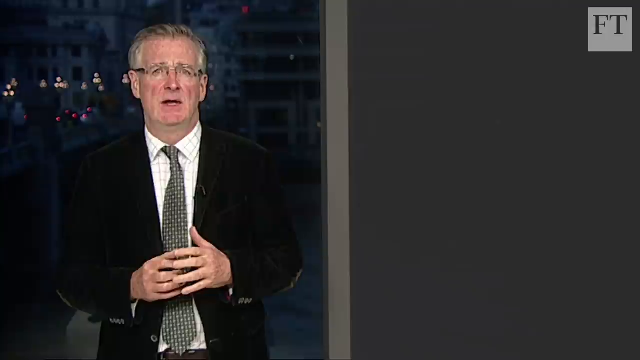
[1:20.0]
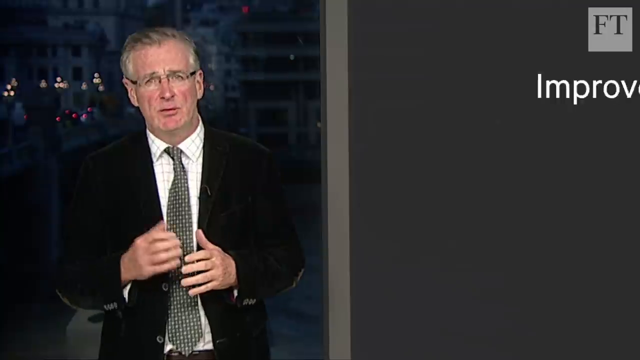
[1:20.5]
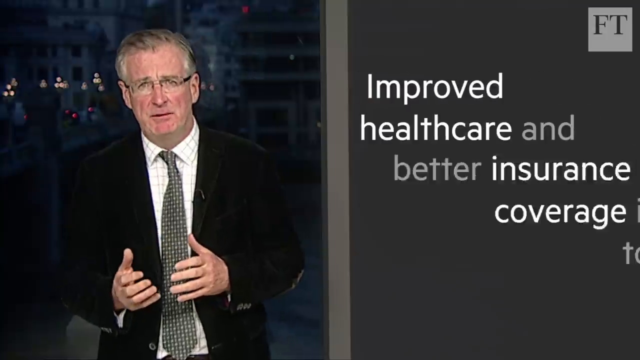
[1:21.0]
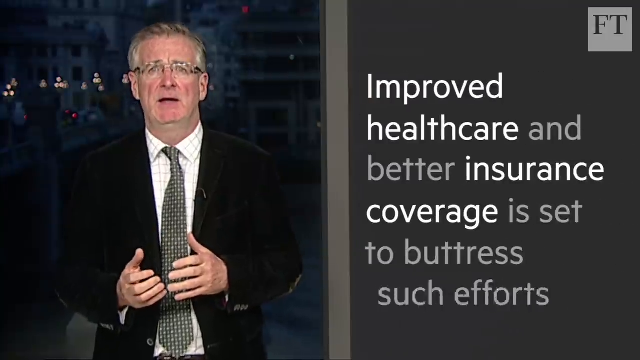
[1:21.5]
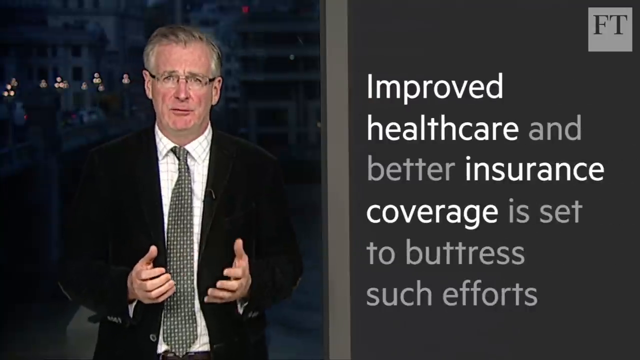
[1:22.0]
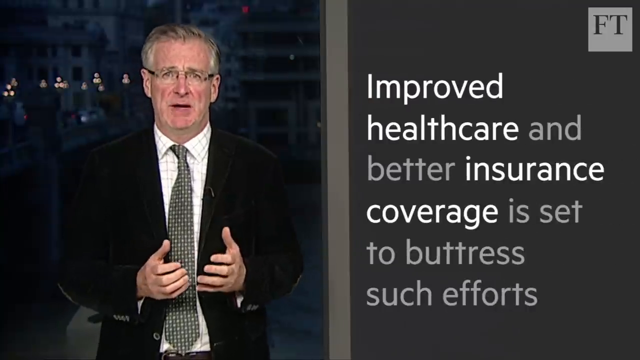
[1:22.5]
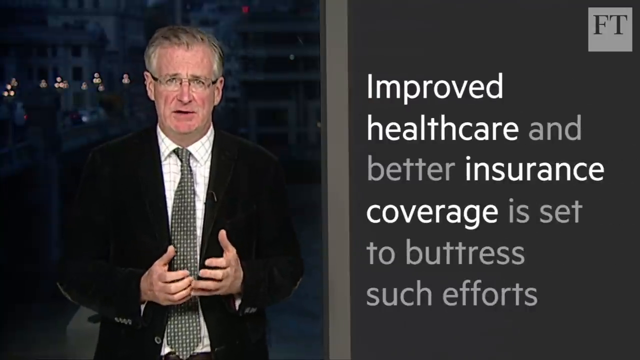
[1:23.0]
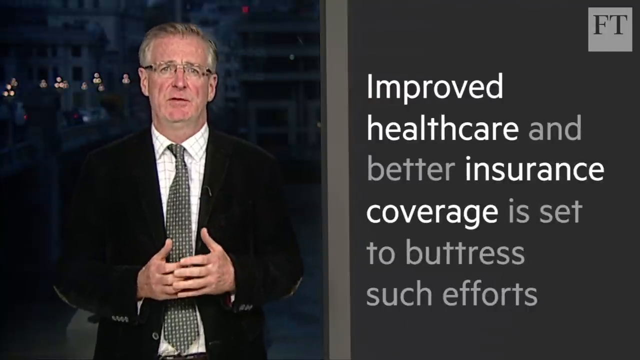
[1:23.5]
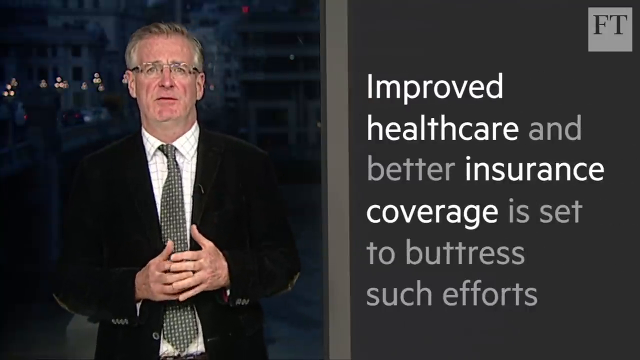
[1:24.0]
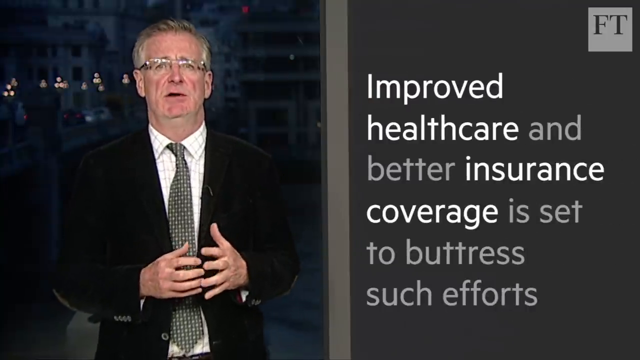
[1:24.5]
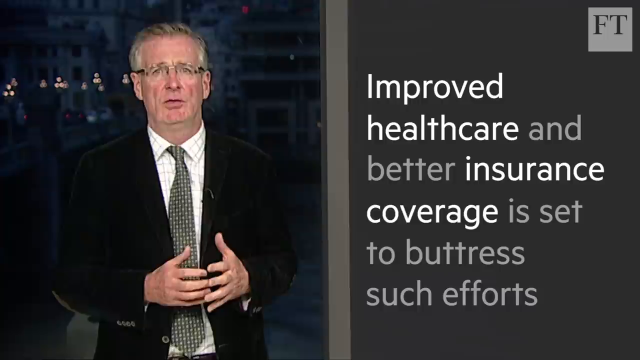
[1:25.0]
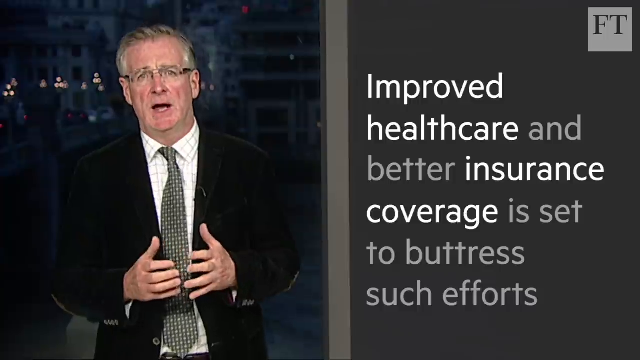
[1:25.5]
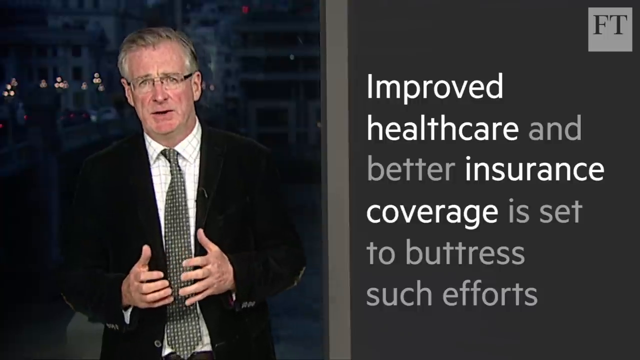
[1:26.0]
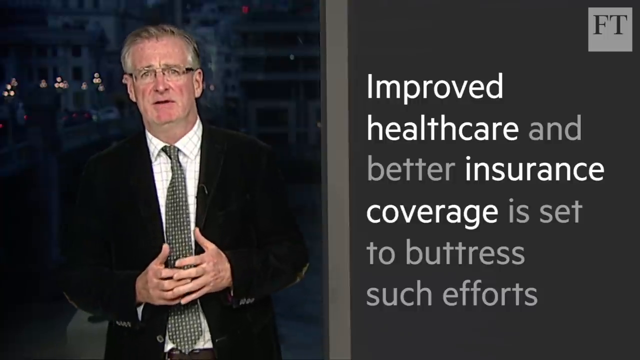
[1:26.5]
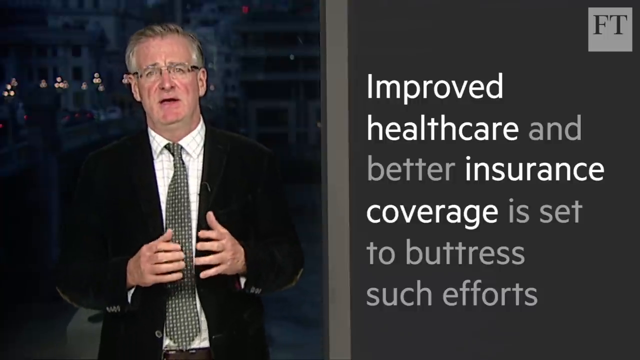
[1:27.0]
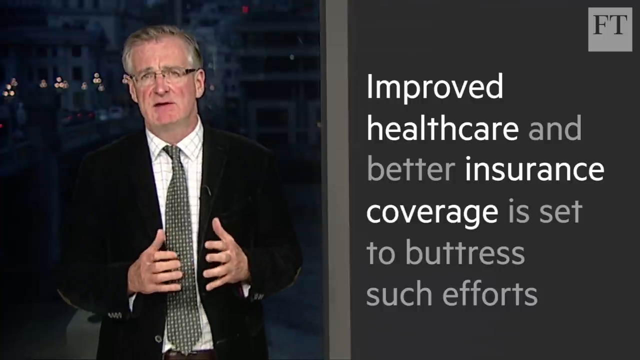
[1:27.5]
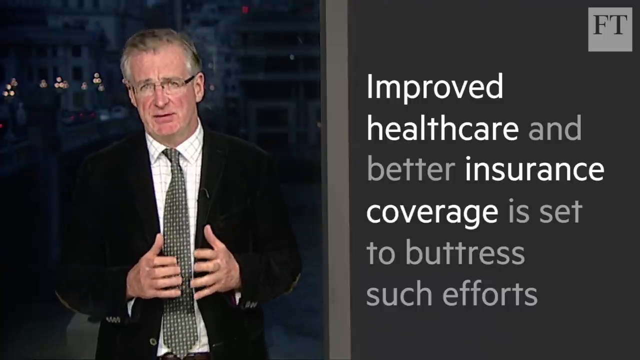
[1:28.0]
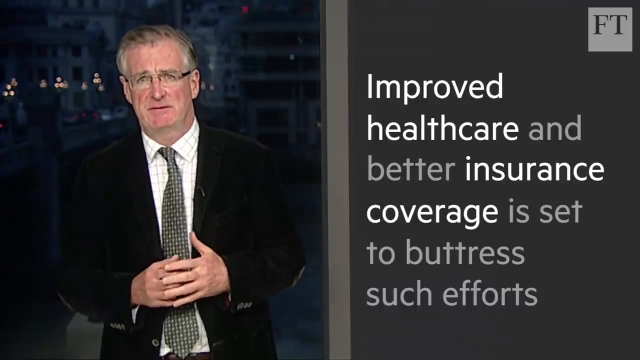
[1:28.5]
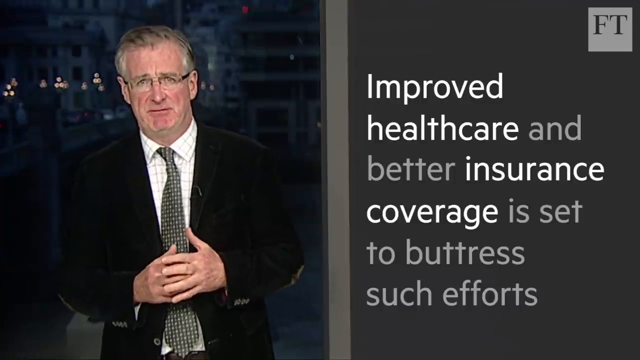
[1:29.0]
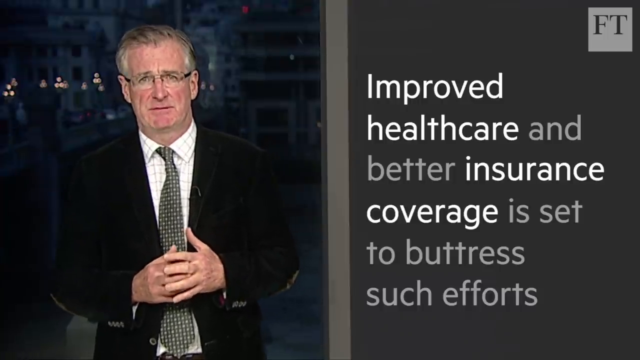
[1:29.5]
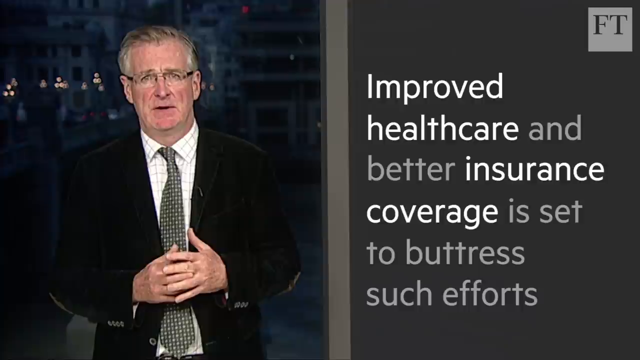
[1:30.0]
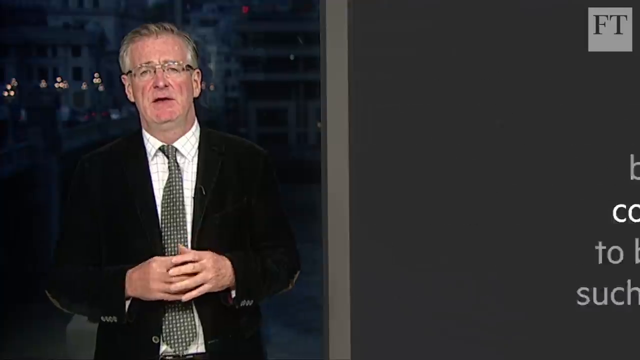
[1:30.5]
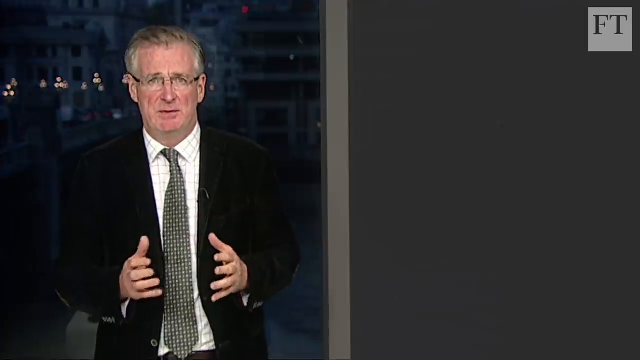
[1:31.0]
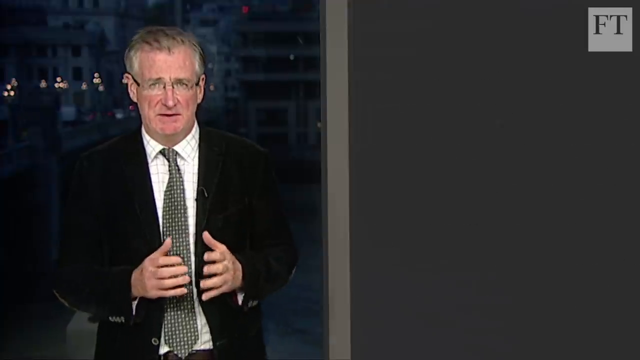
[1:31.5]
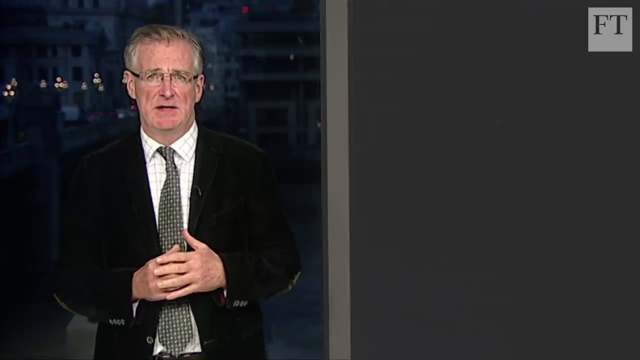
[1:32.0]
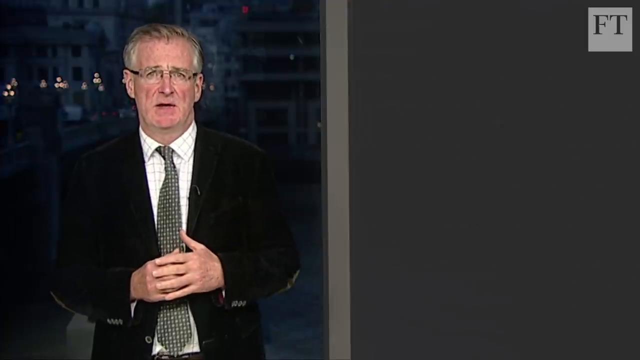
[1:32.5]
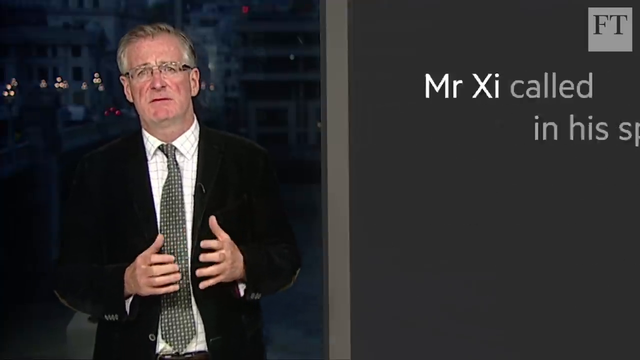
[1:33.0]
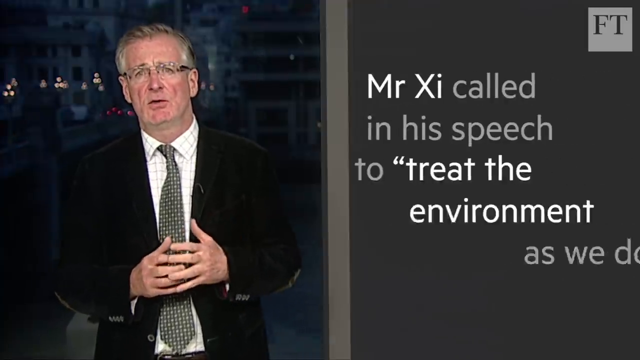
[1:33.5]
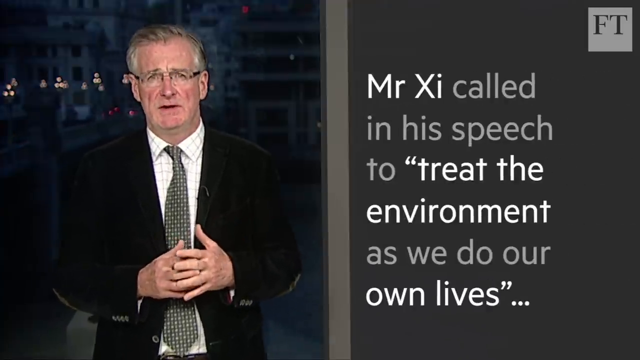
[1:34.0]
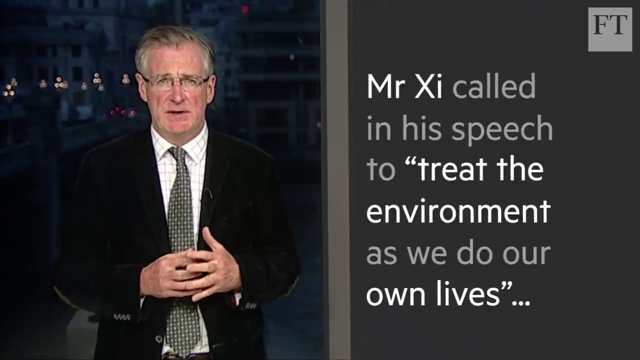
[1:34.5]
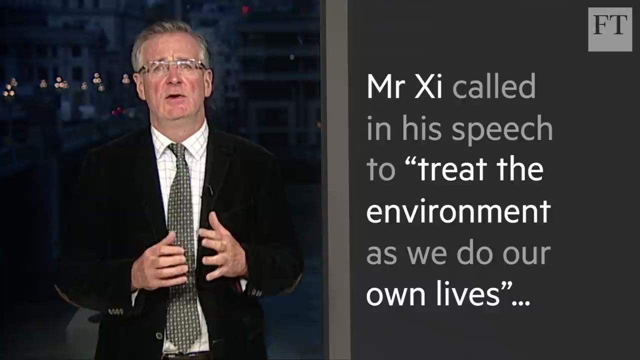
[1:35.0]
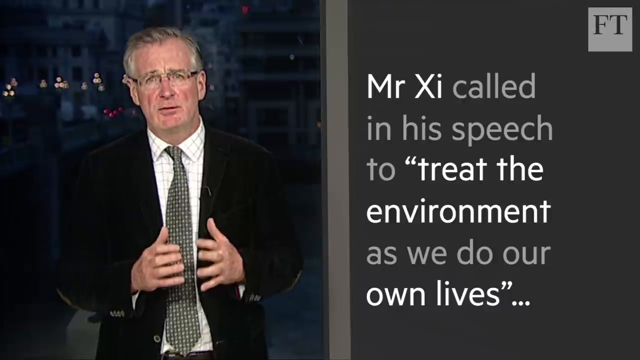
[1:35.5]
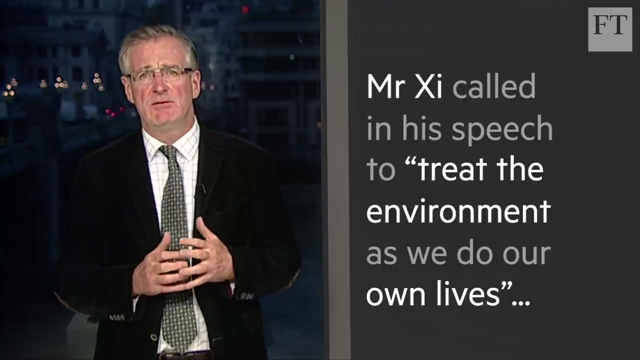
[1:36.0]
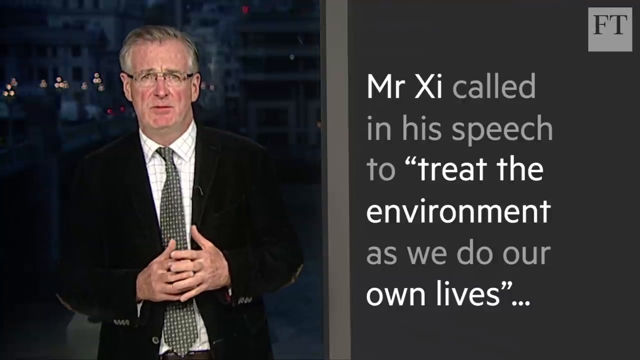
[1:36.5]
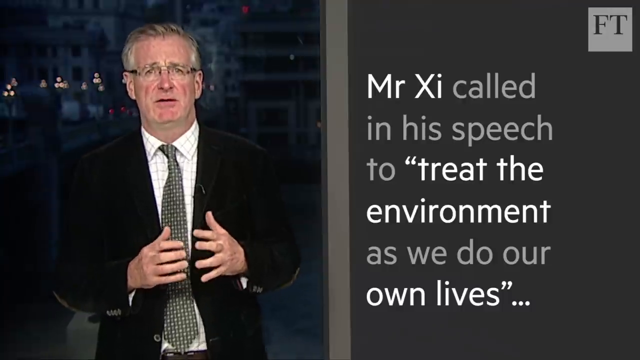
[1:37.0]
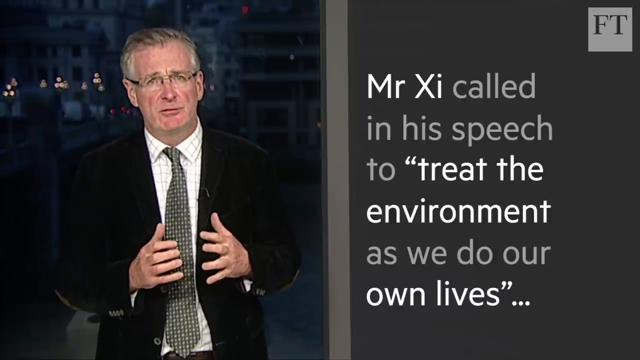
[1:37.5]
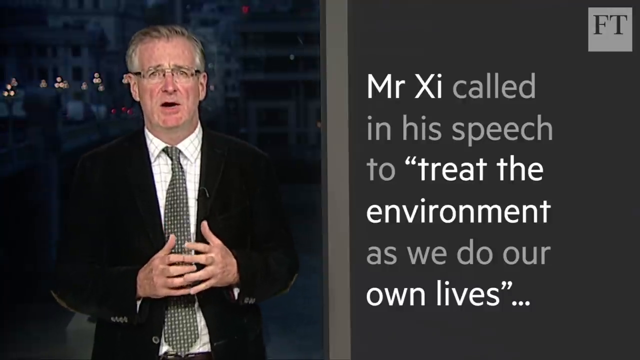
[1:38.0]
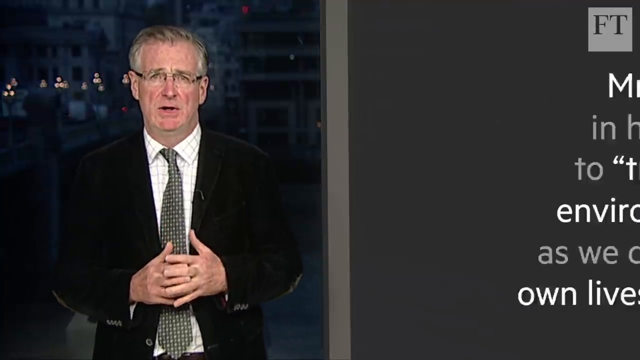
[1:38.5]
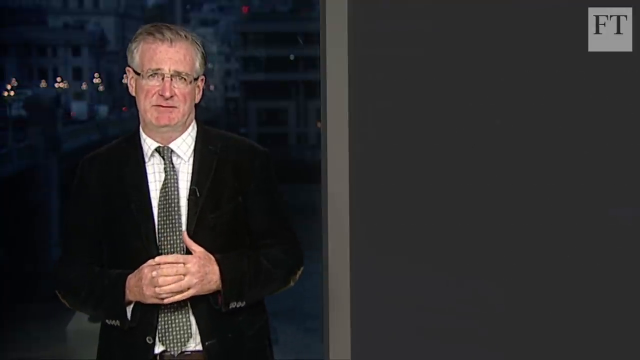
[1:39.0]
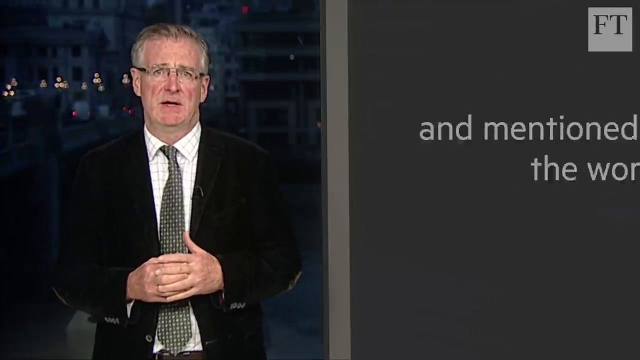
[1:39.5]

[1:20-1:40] A man stands on the left-hand side of the screen speaking to the camera. He has graying hair receding at the hairline and wire-rimmed glasses, and wears a black jacket, a white checked shirt and a patterned dark gray tie, holding his hands in front of him as he speaks to emphasize his words. In the text box to his right, against a dark gray background, it says "Improved health care and better insurance coverage is set to buttress such efforts." In the upper right of that screen are the initials "FT" for Financial Times, which stay constant as the text box changes. The man continues speaking to the camera, and the text box changes to "Mr. Xi called in his speech to treat the environment as we do our own lives and mentioned the word green 15 times."